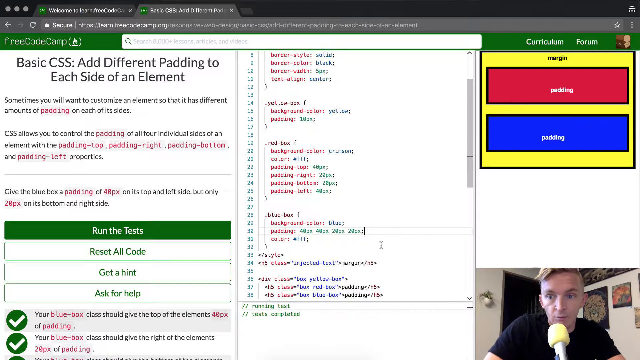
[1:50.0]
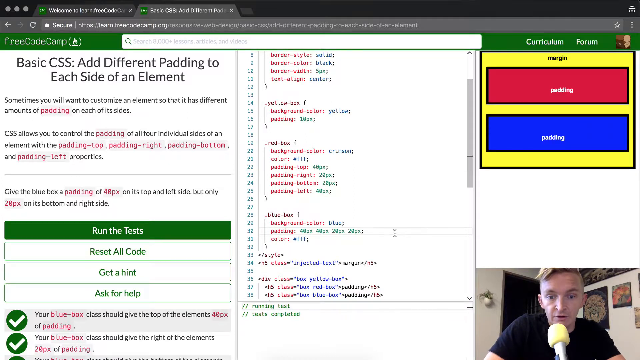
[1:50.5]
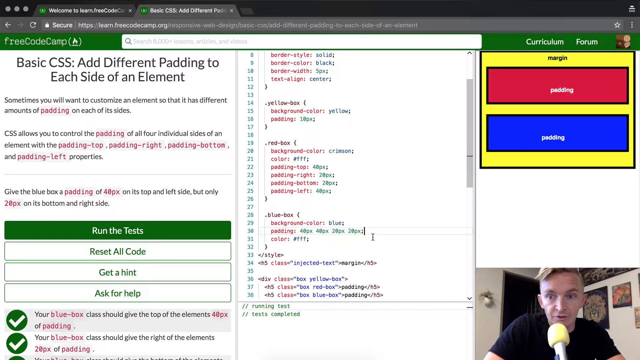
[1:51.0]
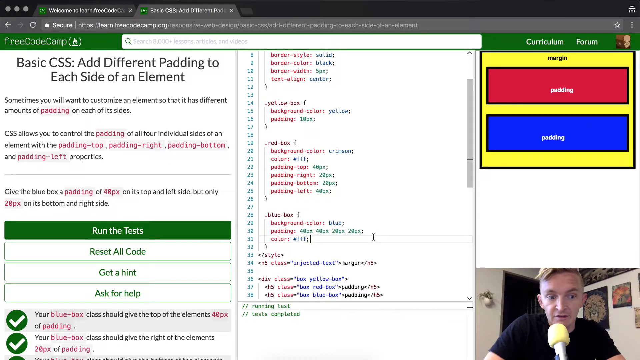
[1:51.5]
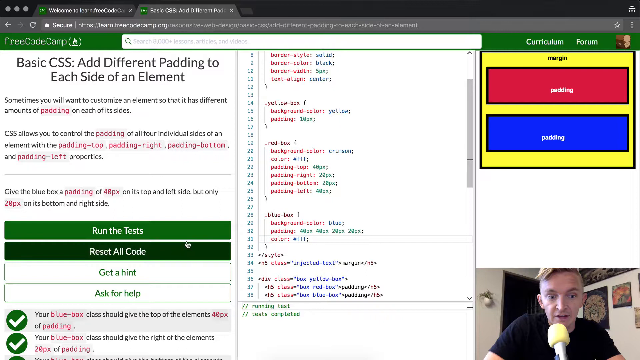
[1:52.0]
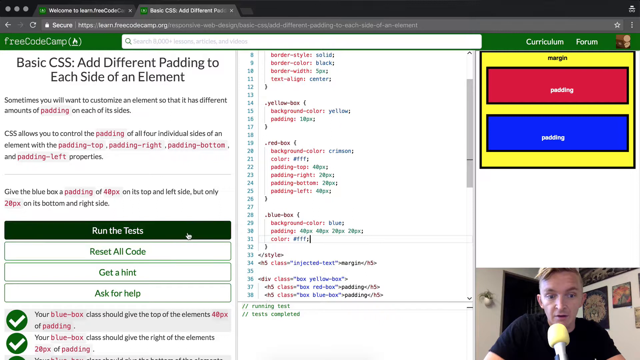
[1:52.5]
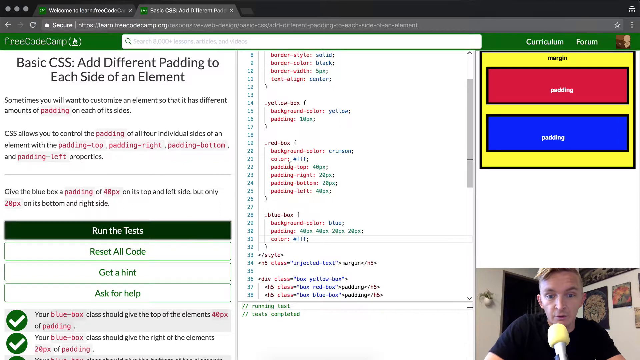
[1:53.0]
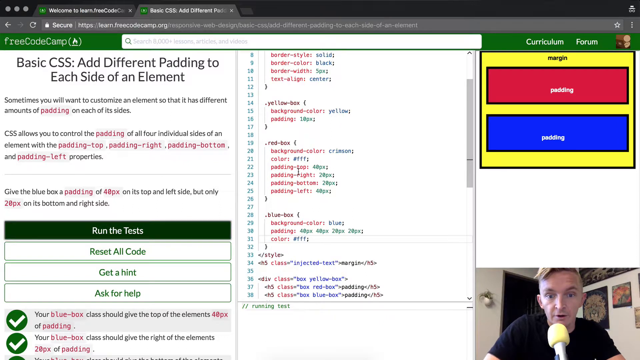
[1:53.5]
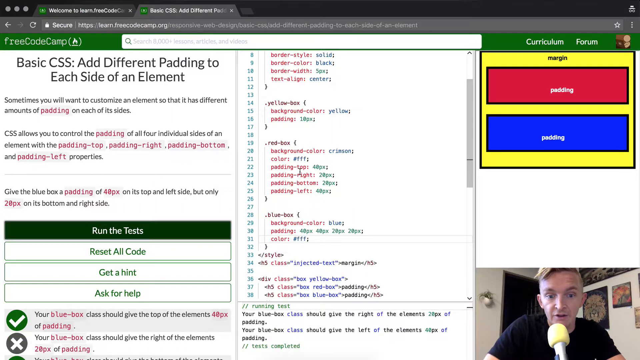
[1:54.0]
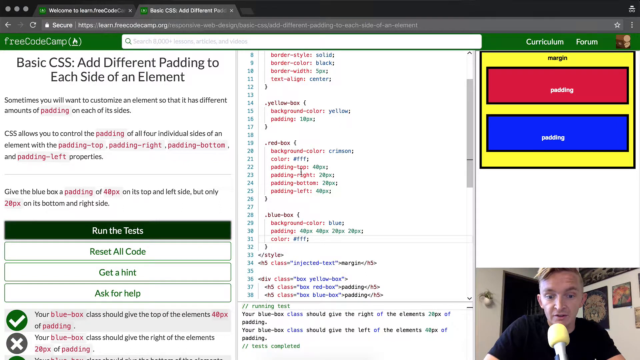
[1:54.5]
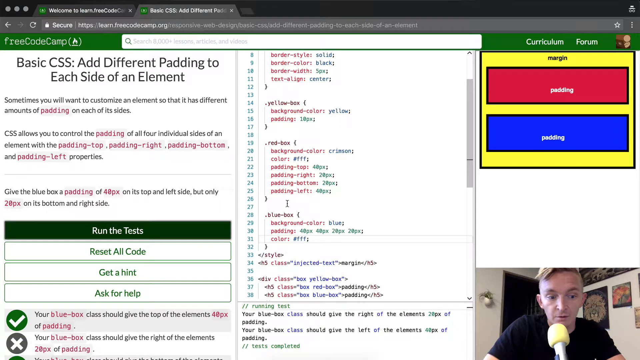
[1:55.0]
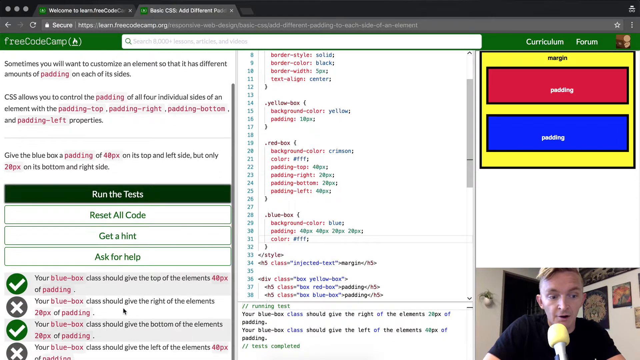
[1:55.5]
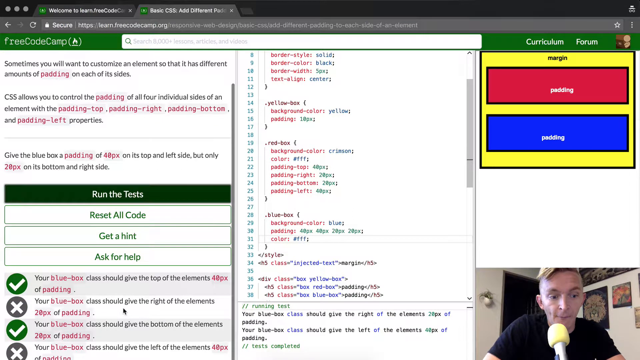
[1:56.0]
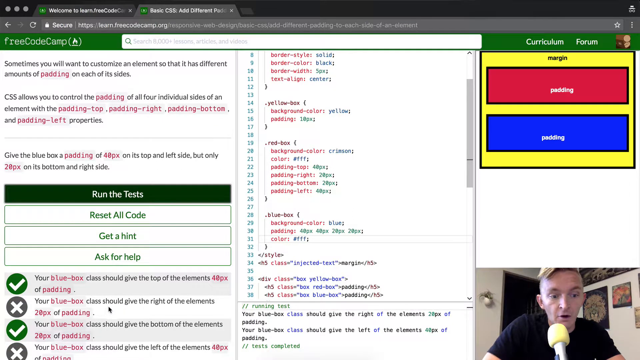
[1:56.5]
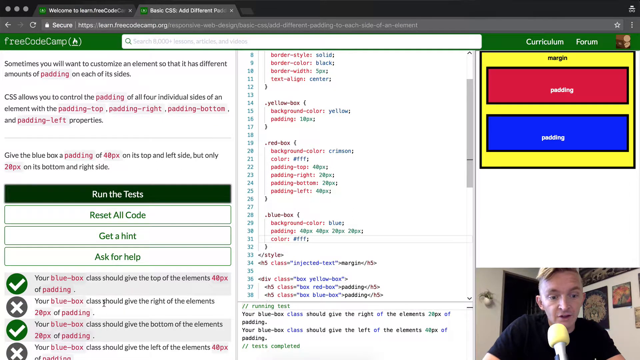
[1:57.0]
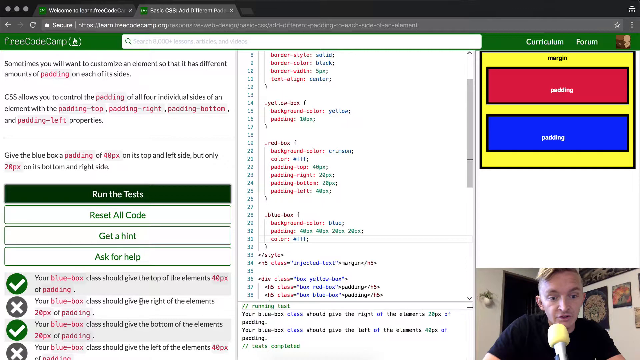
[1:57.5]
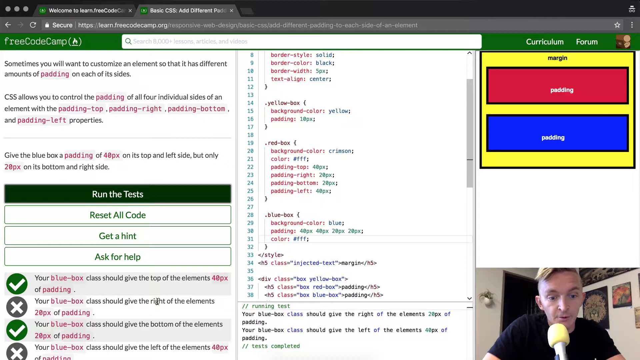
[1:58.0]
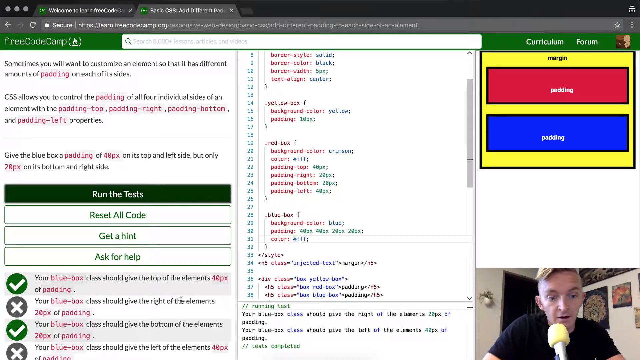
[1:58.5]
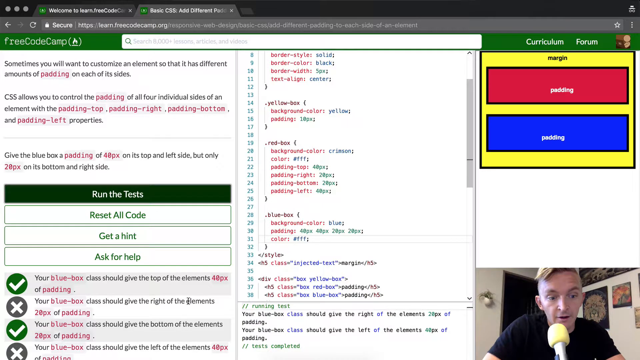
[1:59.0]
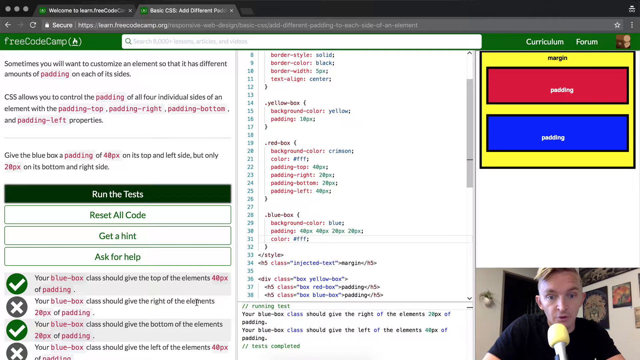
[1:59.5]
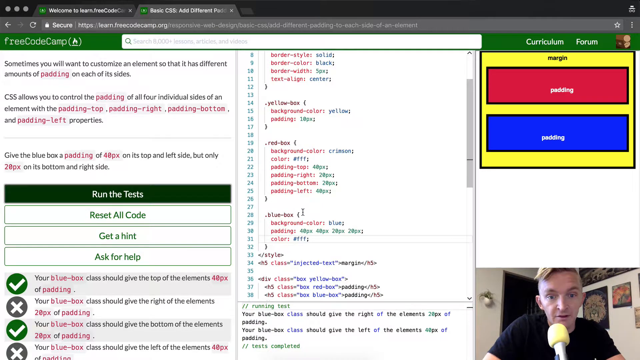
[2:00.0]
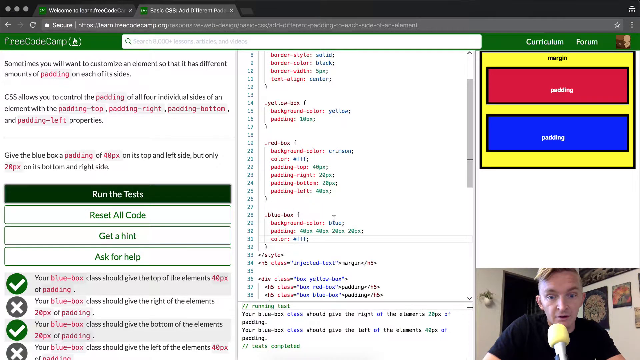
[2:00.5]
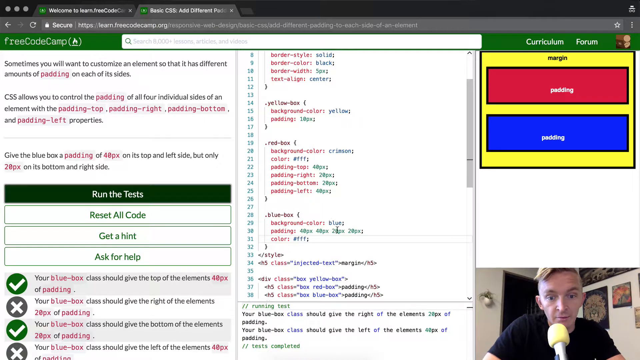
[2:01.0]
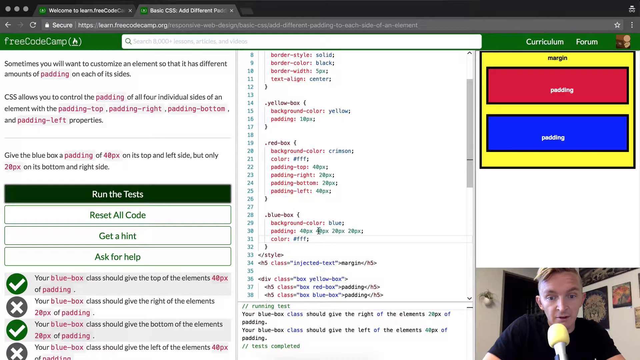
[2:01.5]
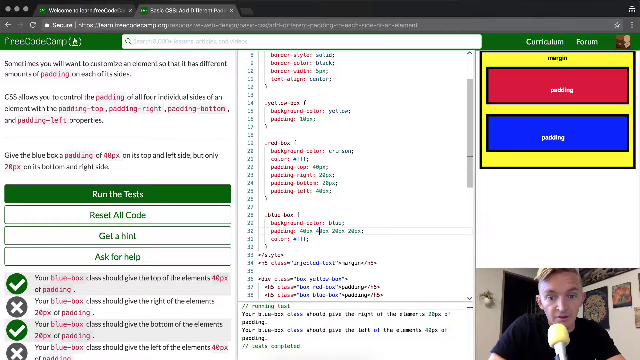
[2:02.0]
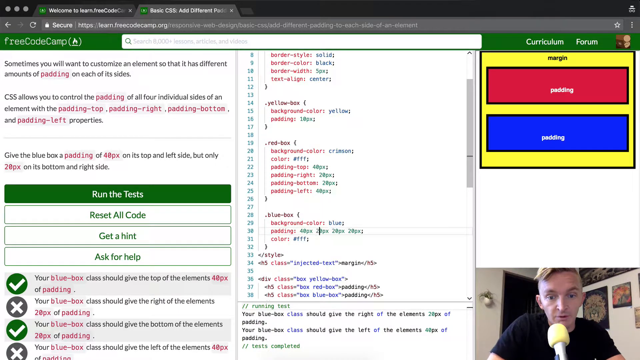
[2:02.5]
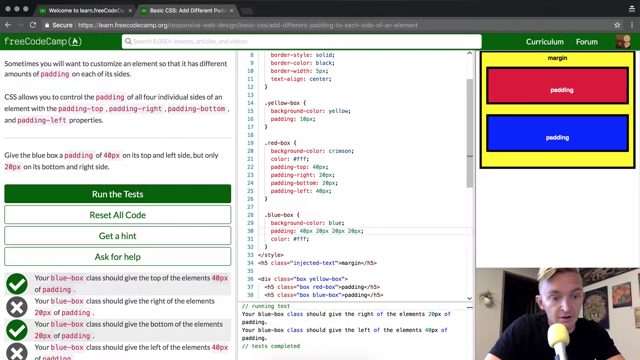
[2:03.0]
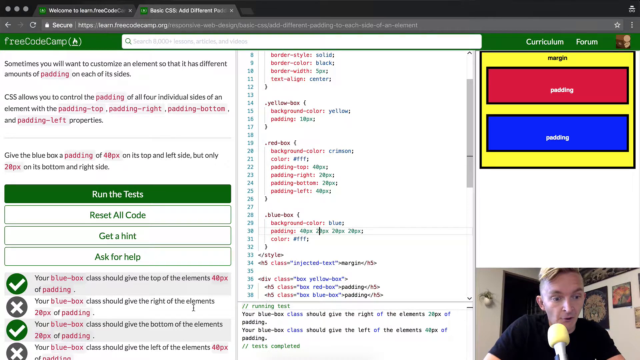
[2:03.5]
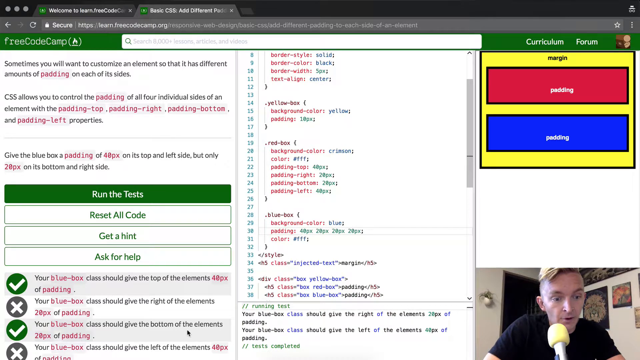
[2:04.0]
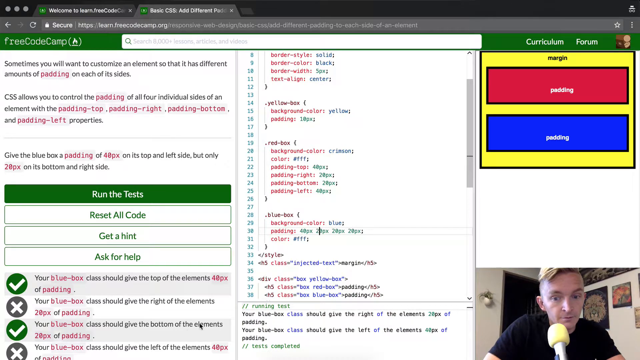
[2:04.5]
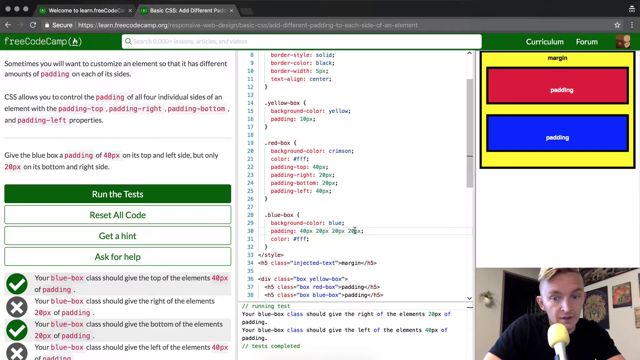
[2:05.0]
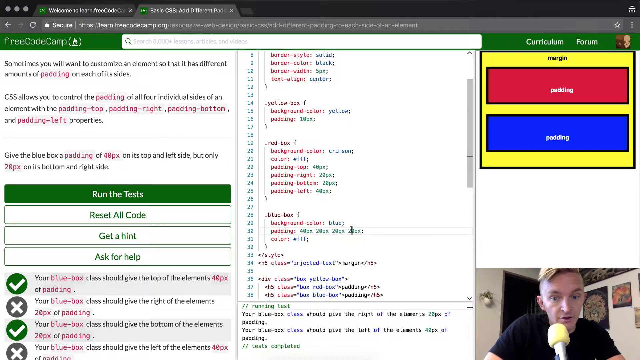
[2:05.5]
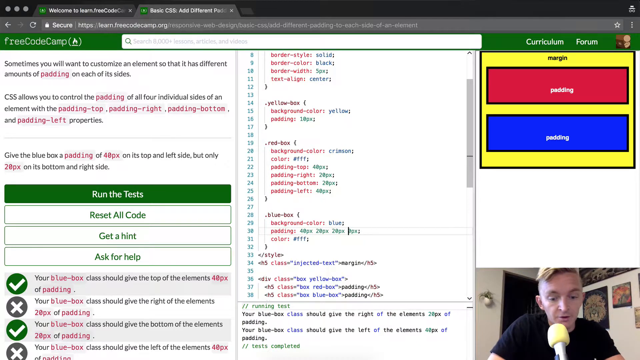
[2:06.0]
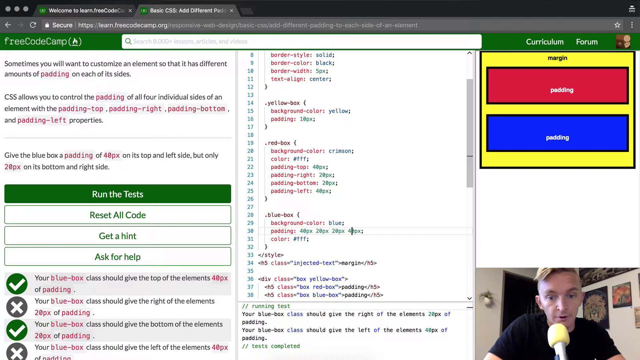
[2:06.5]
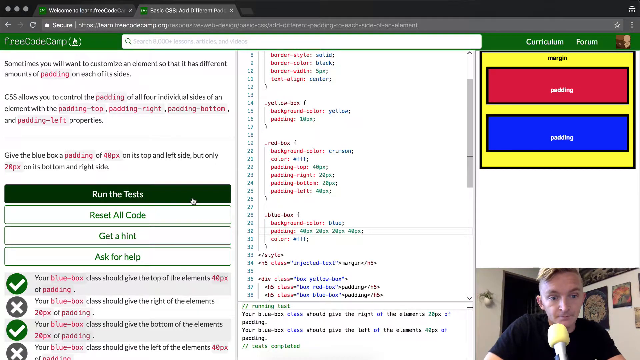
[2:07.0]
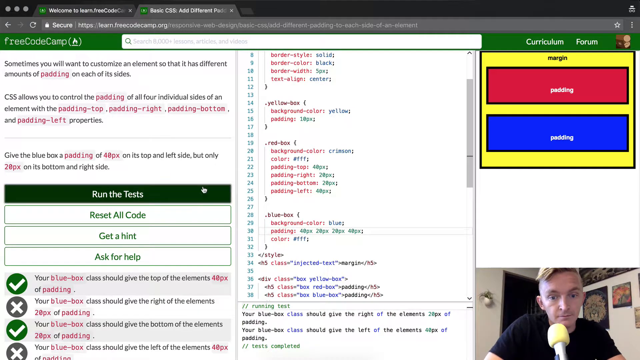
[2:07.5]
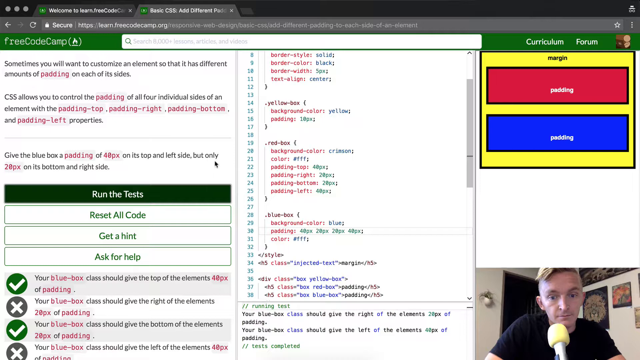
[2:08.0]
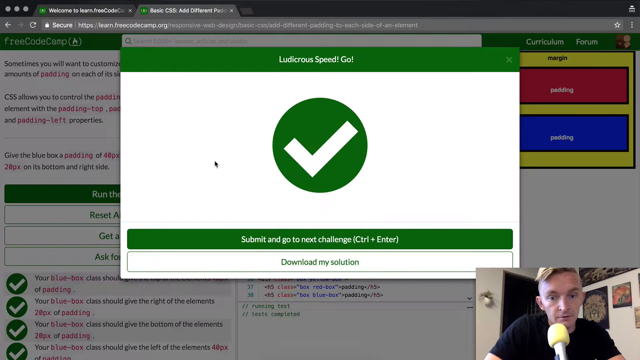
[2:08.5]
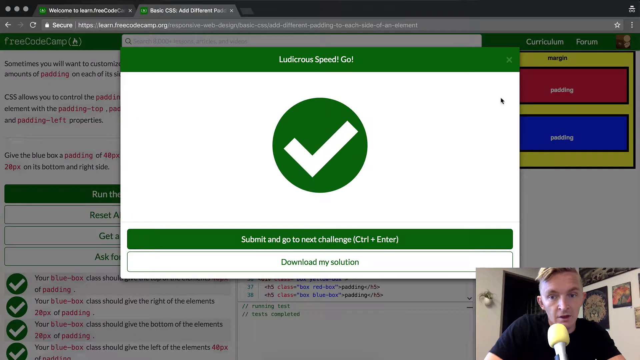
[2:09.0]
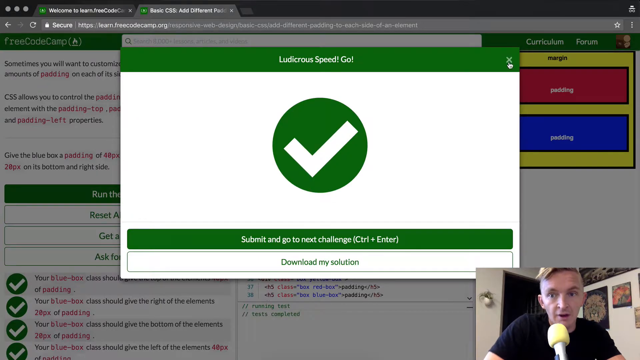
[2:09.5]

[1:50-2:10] The instructor's cursor is back at the code, and he moves it to the very left, to the action boxes, and clicks the green run test button. The padding changes and some output appears at the very bottom of the screen. He scrolls down, and beneath the action buttons a list of requirements appears, with check marks by a couple of them and a red X by another. He hovers his cursor over that one, then goes back to the code, deletes something and redoes it, and clicks run test again. The success screen pops up on the page.